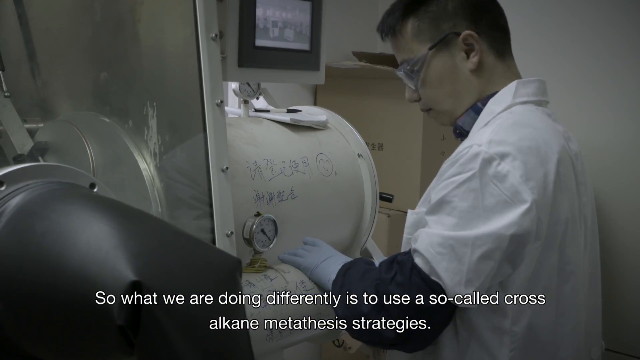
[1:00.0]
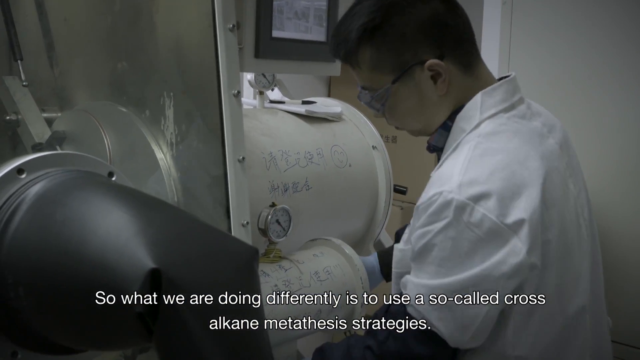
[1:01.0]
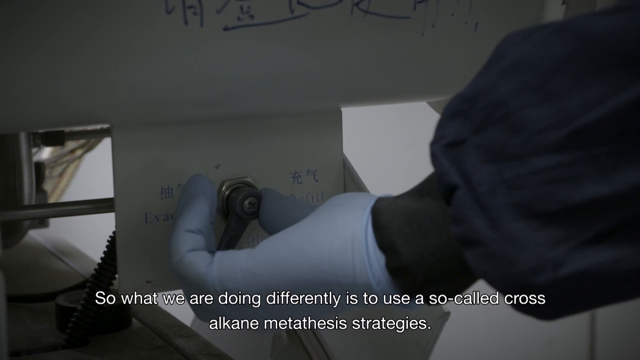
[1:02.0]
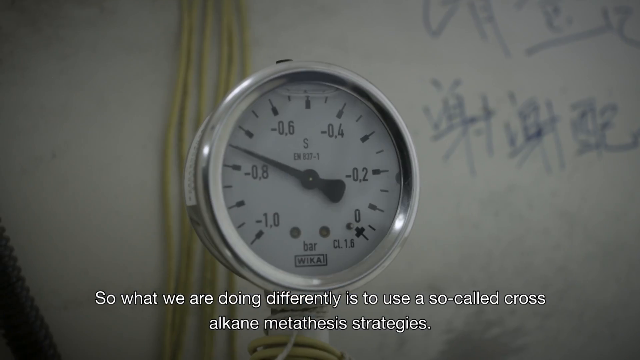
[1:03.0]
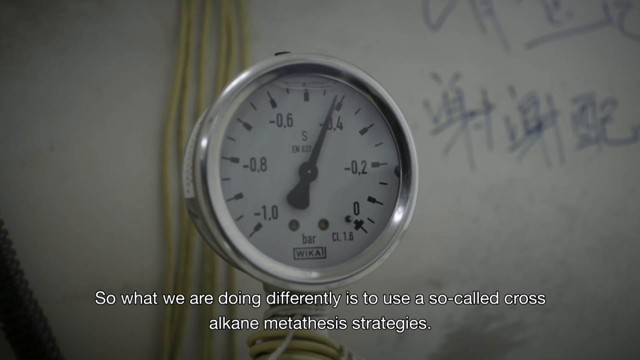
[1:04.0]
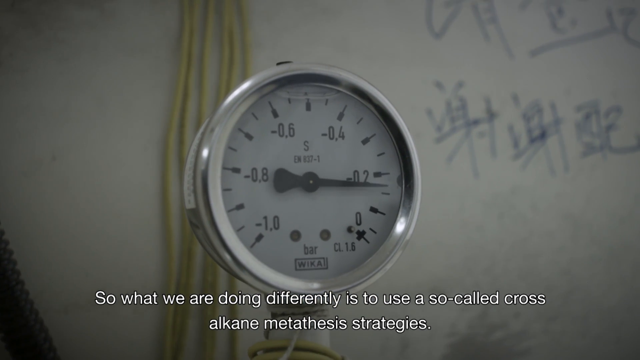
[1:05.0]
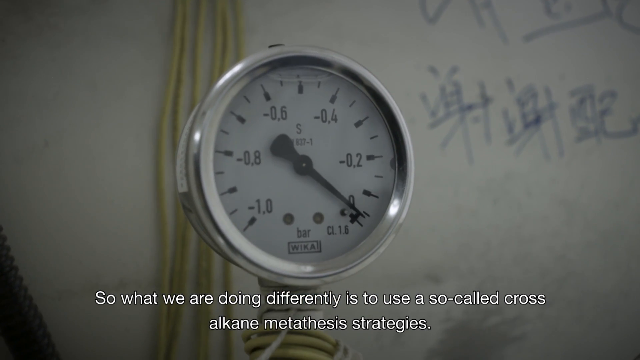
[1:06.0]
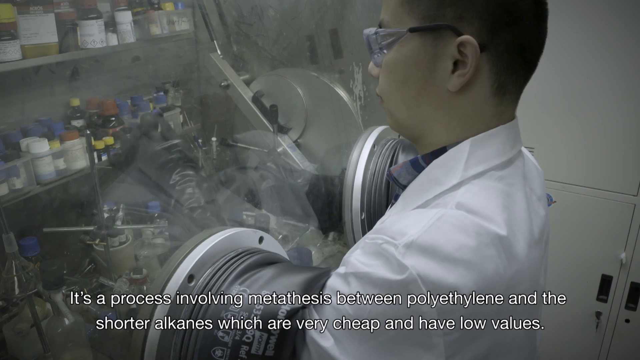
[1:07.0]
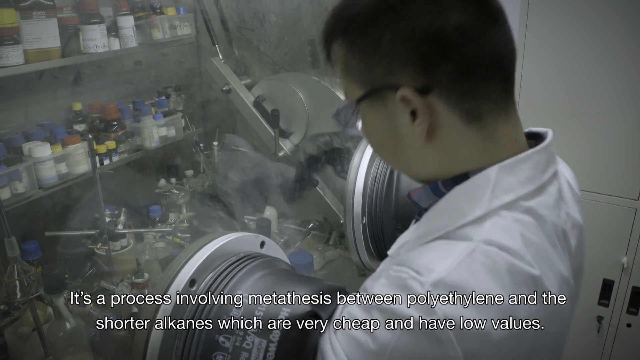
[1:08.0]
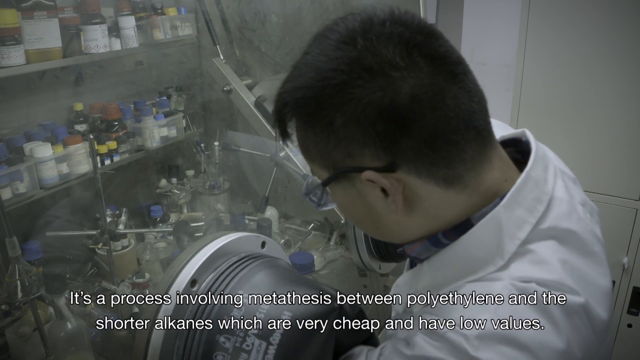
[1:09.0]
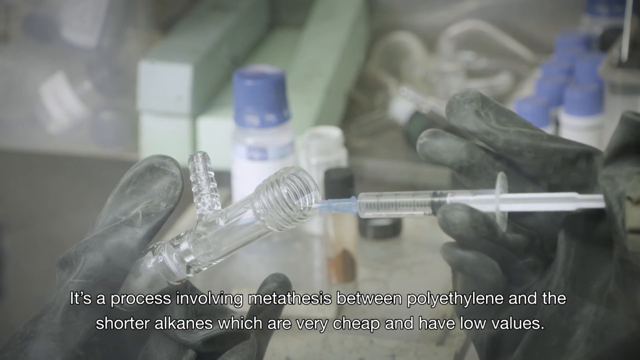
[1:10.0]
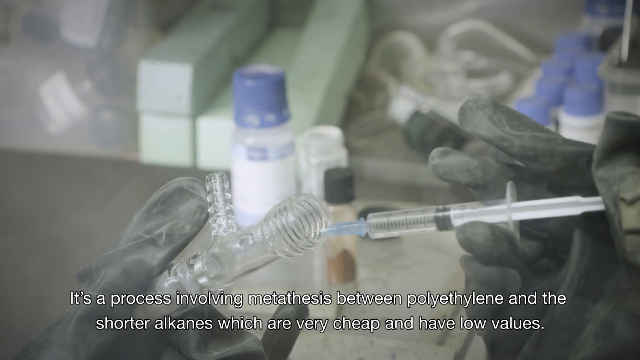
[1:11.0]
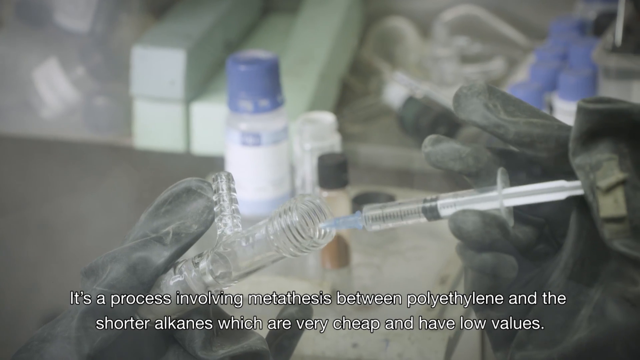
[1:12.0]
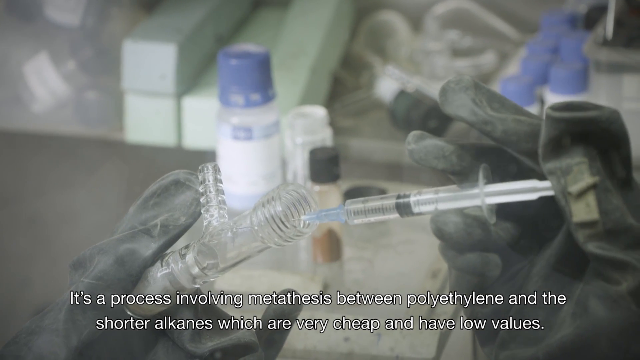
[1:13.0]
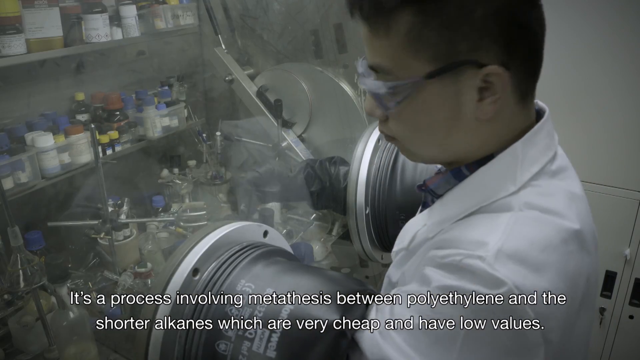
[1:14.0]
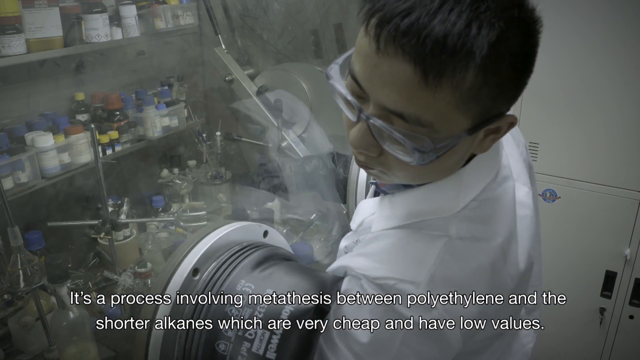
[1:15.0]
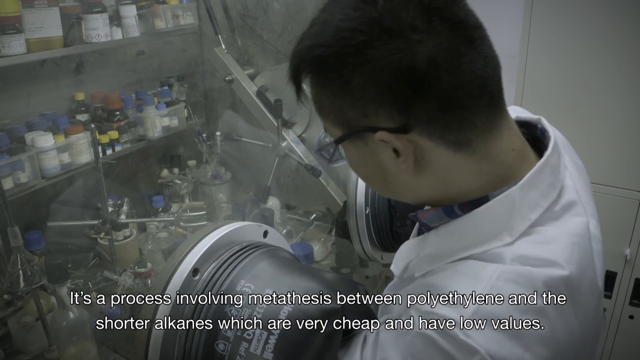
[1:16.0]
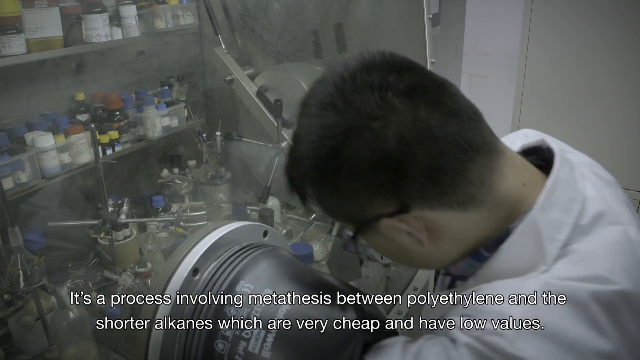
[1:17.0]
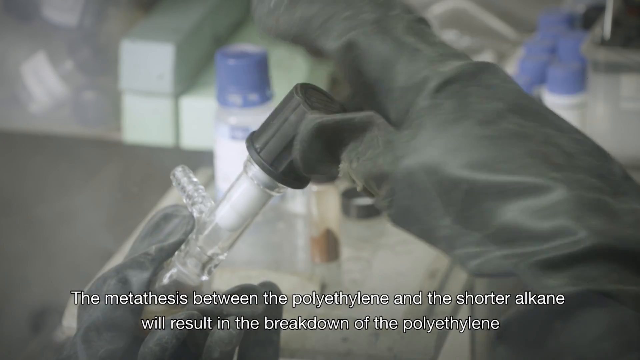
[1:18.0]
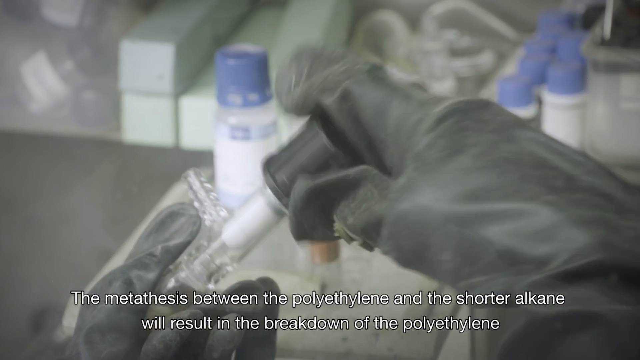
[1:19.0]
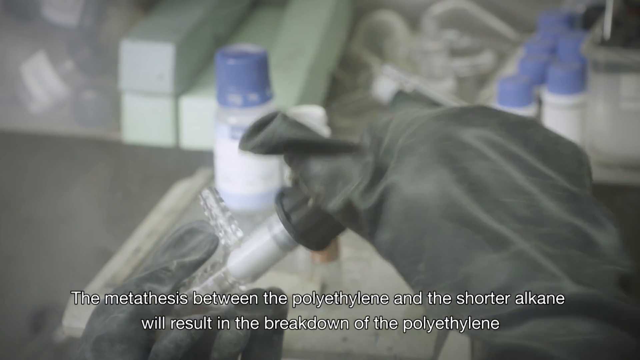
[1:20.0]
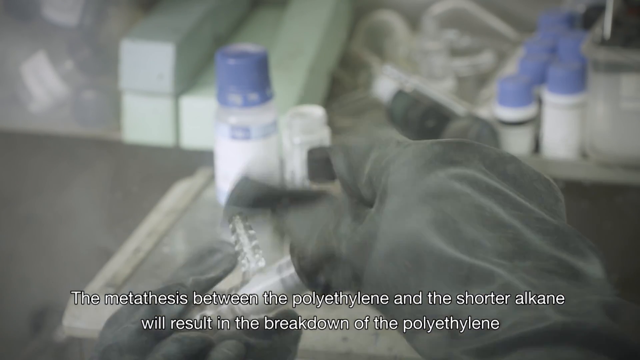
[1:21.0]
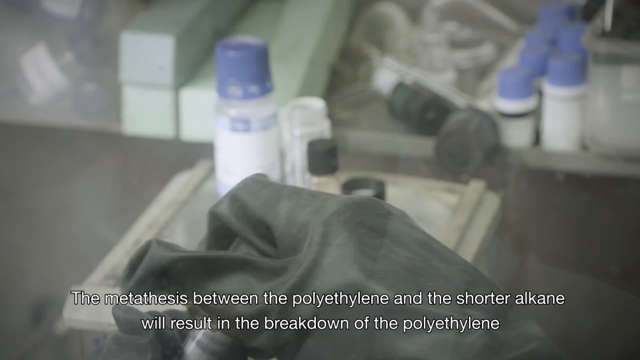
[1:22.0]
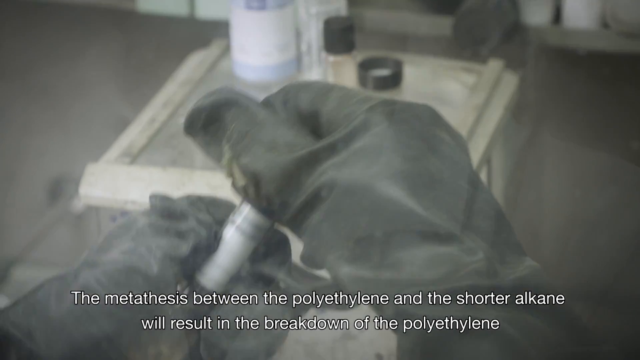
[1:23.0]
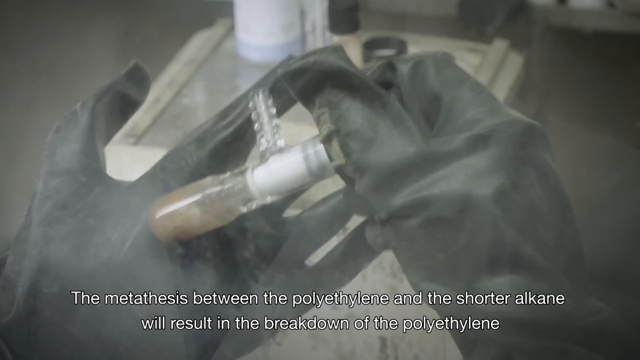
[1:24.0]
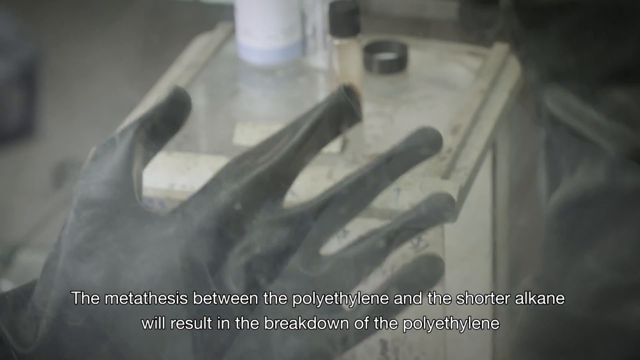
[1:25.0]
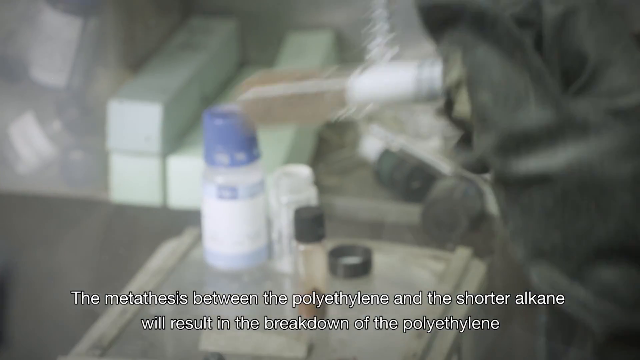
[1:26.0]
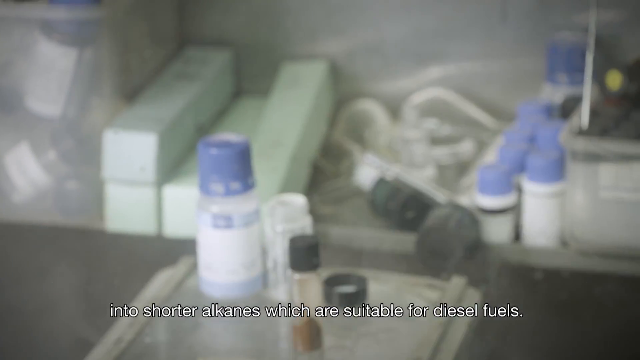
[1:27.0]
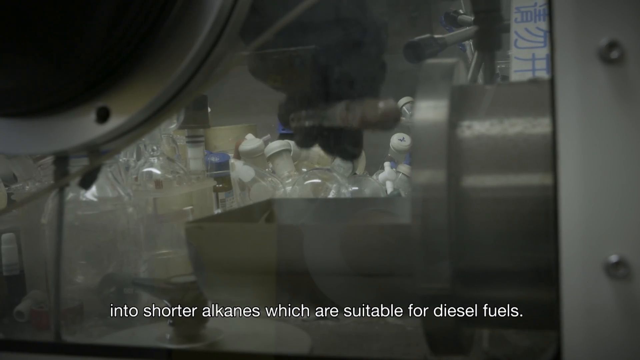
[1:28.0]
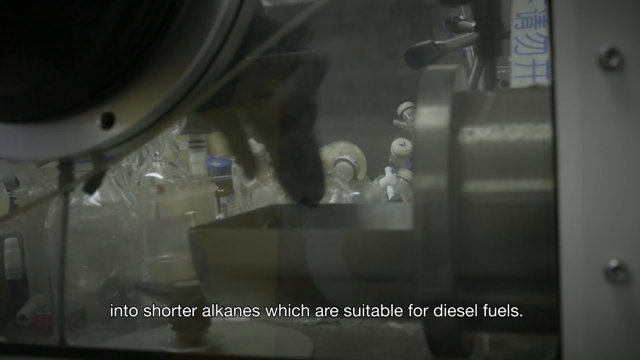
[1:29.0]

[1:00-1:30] A scientist stands next to a big white cylinder machine with some Chinese writing on it and a circular gauge on its top surface. A close-up shows his hand near the bottom of the machine turning a small gray dial counterclockwise, and another close-up shows the dial inside the gauge on top of the machine moving clockwise. The scientist then works at a station with a glass box that has two holes fitted with black gloves on the inner side; he puts his arms through the holes, staying behind the glass barrier, and works with his hands inside the gloves. His gloved hands hold a glass test tube in one hand and a syringe in the other, pushing some type of clear liquid into the test tube. He then puts a black lid, with what looks like some kind of white cotton hanging down from it, on top of the test tube. The tube is kind of tapped against the palm of the hand and shaken a little, and the liquid inside turns a brown color. The test tube is then placed into a little silver tray. Text at the bottom of the screen reads "So what we are doing differently is to use a so-called cross alkane metathesis strategies. It's a process involving metathesis between polyethylene and the shorter alkanes which are very cheap and have low values. The metathesis between the polyethylene and the shorter alkane will result in the breakdown of the polyethylene into shorter alkanes, which are suitable for diesel fuels."